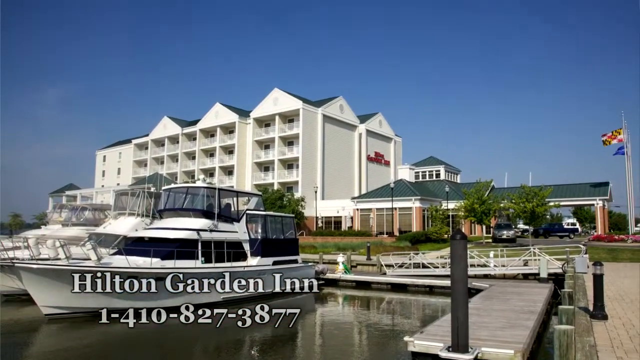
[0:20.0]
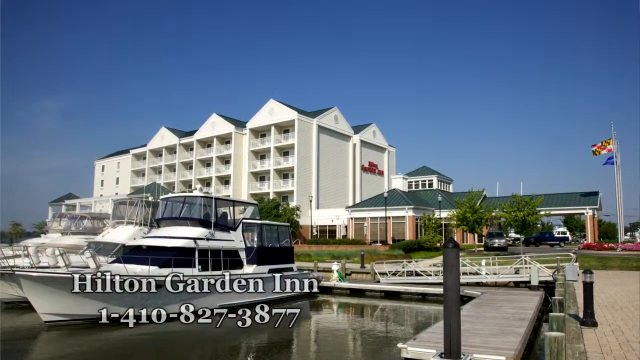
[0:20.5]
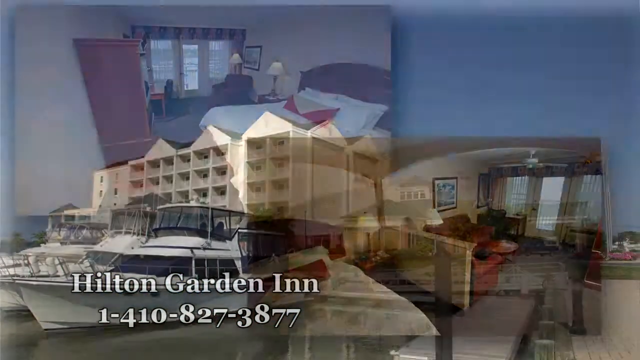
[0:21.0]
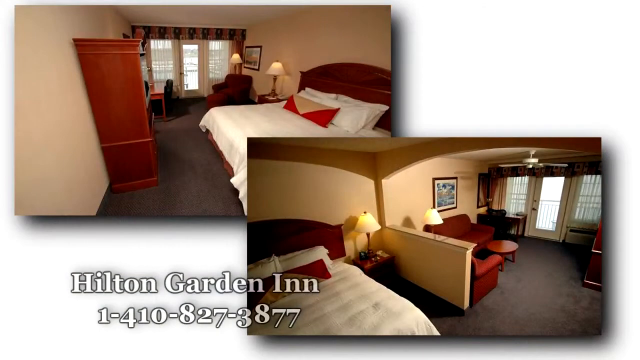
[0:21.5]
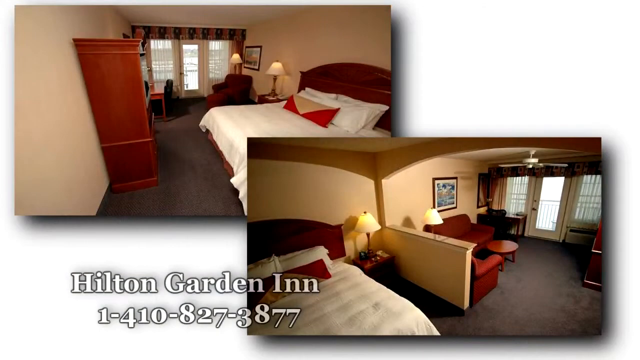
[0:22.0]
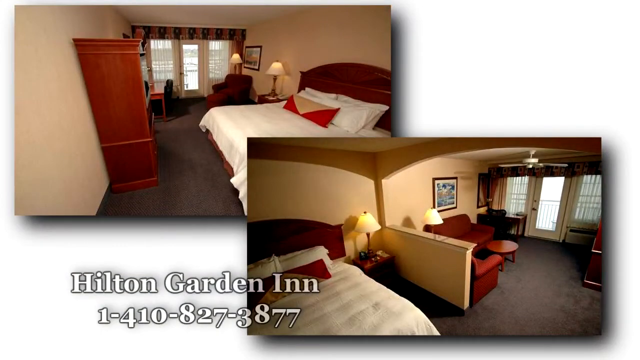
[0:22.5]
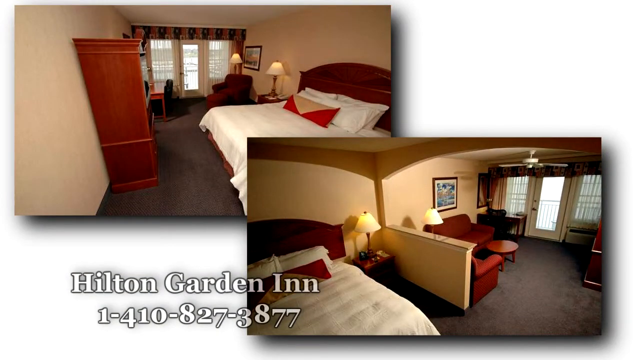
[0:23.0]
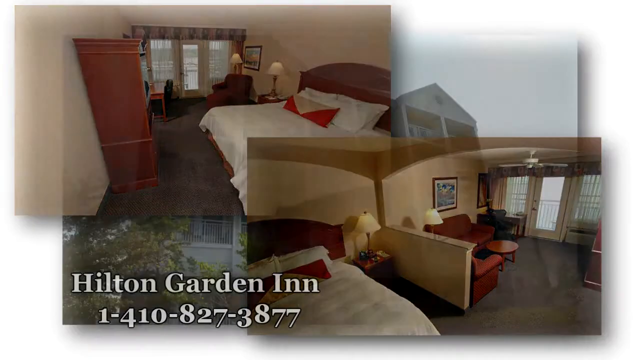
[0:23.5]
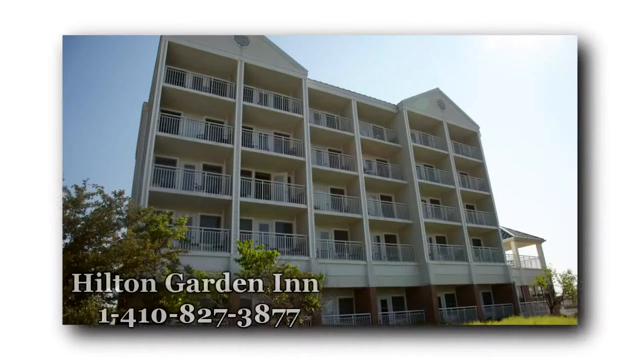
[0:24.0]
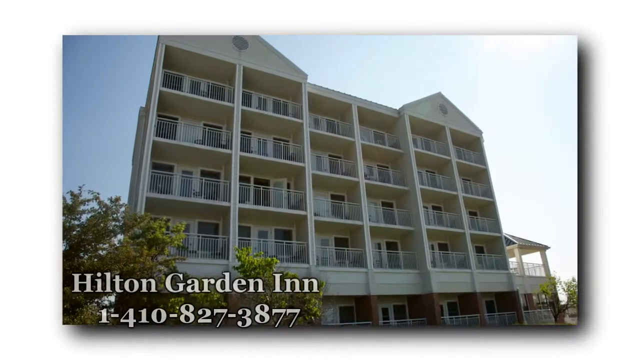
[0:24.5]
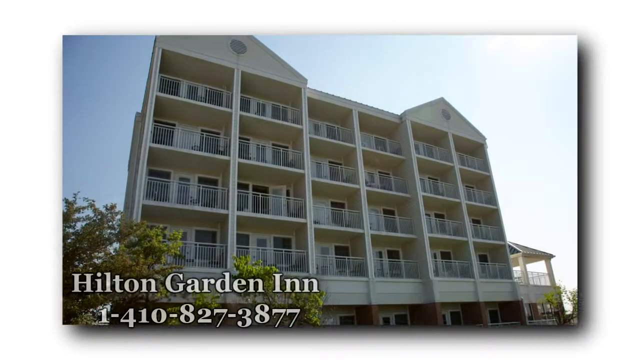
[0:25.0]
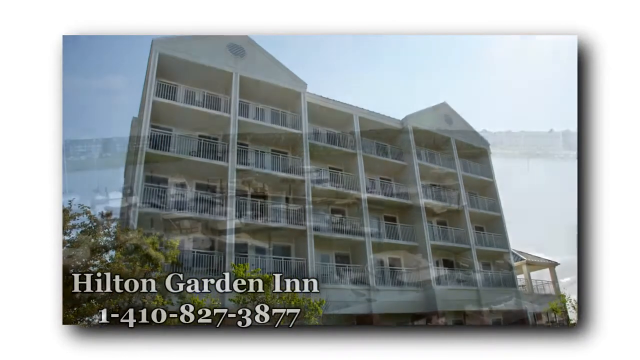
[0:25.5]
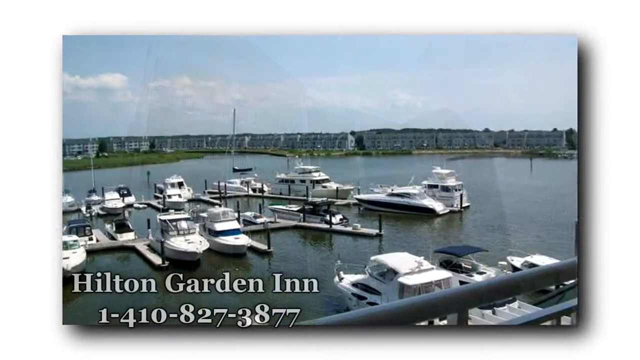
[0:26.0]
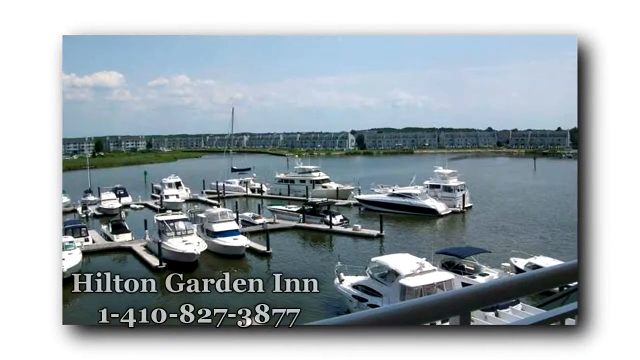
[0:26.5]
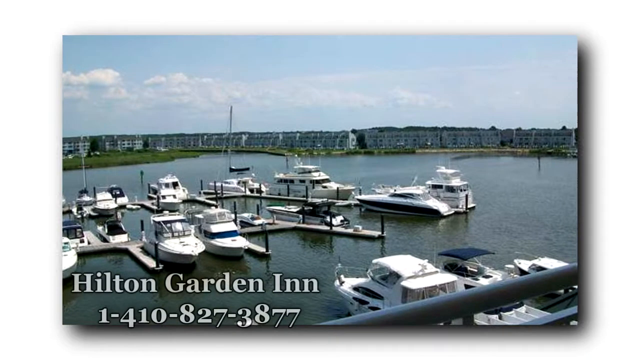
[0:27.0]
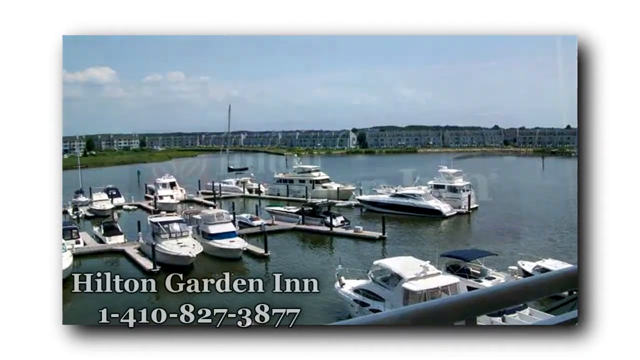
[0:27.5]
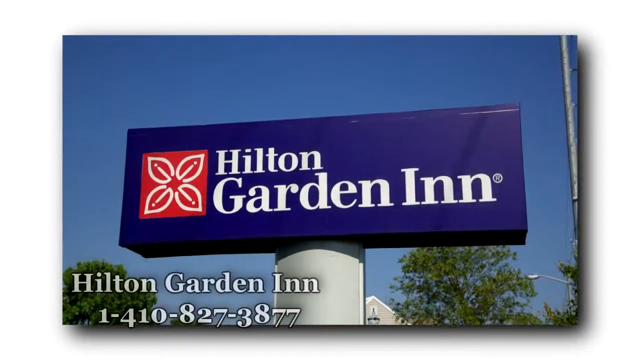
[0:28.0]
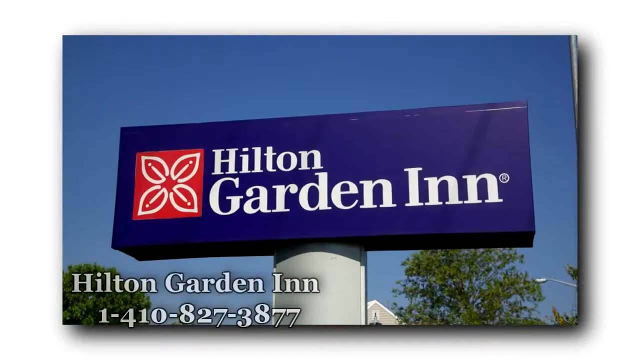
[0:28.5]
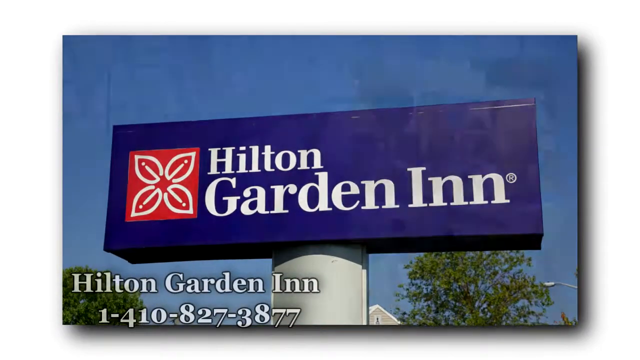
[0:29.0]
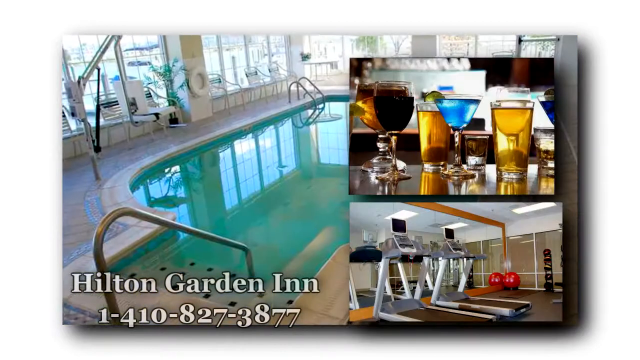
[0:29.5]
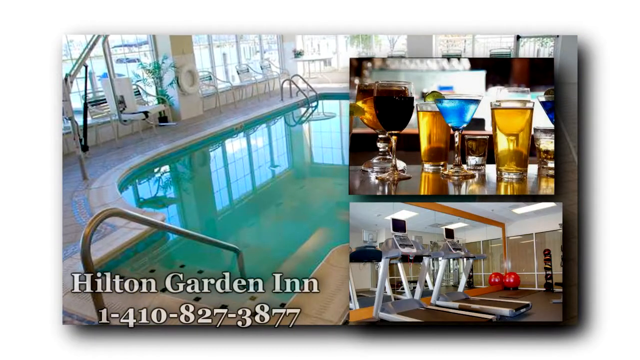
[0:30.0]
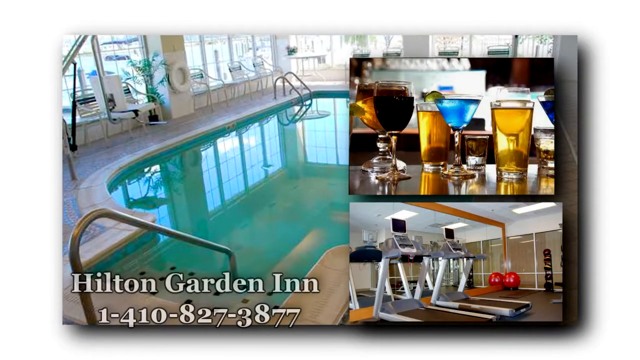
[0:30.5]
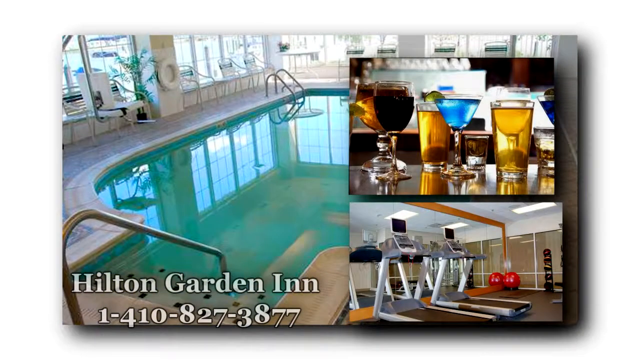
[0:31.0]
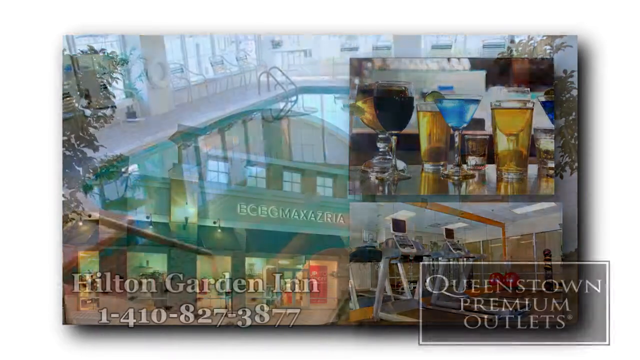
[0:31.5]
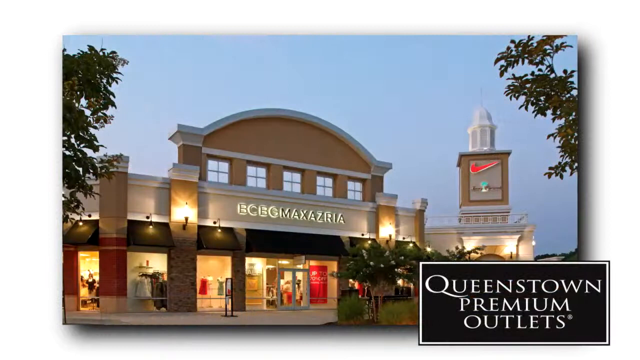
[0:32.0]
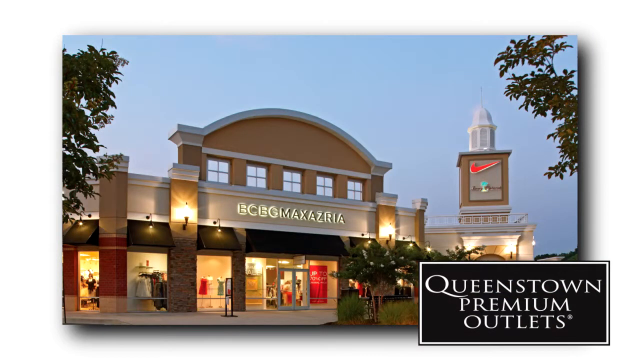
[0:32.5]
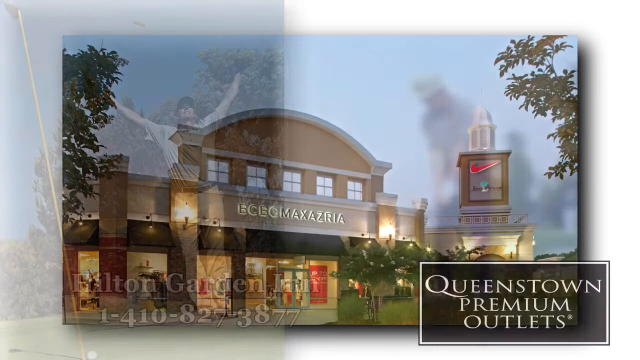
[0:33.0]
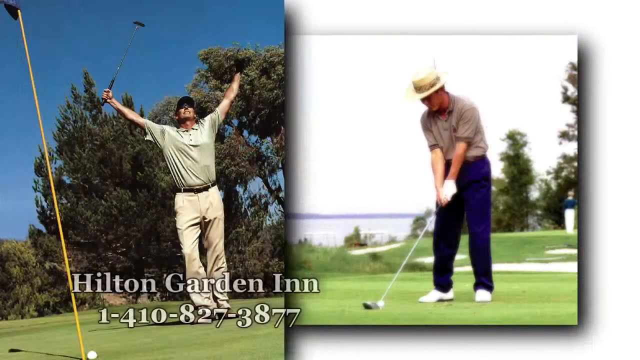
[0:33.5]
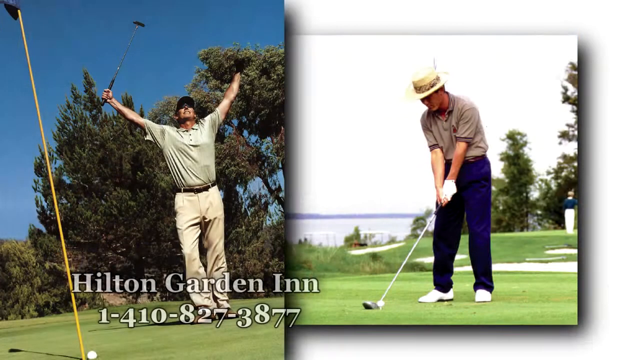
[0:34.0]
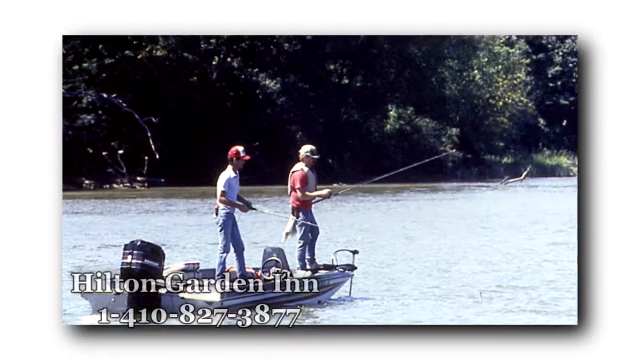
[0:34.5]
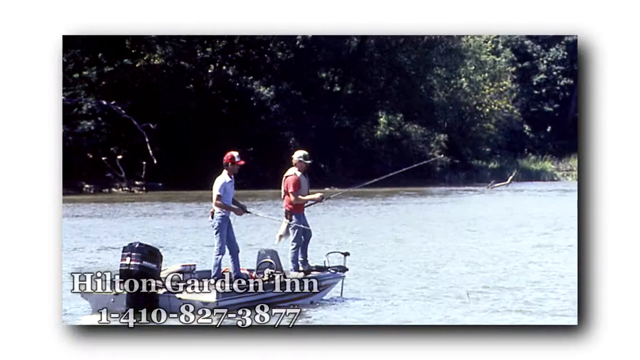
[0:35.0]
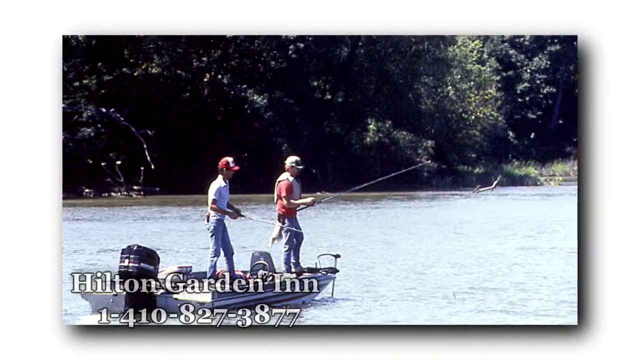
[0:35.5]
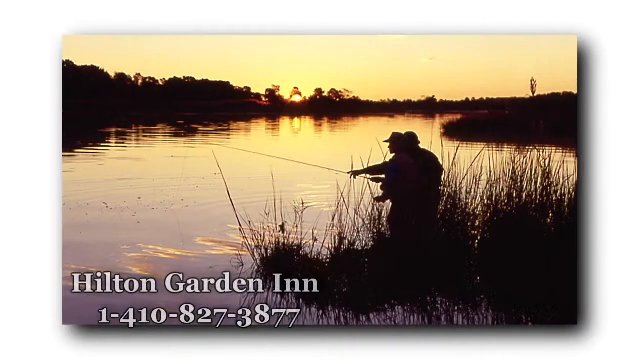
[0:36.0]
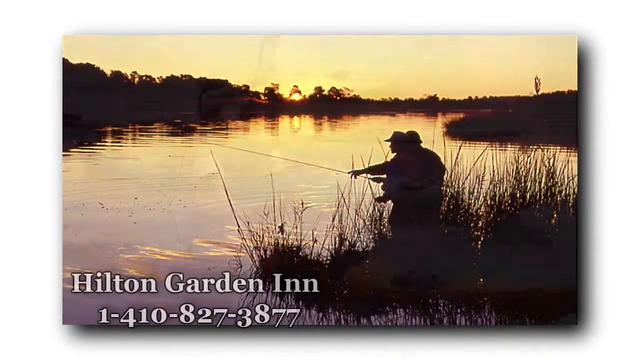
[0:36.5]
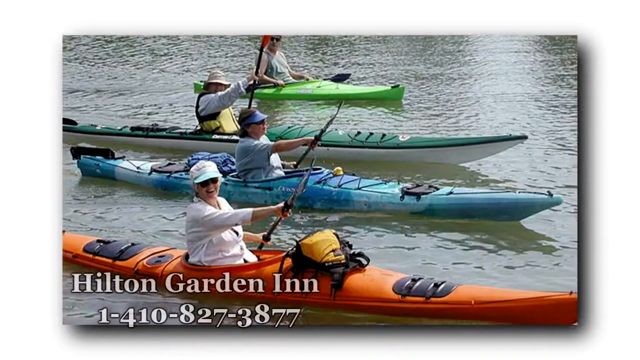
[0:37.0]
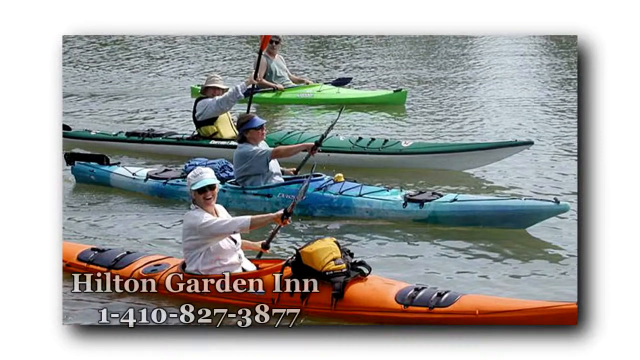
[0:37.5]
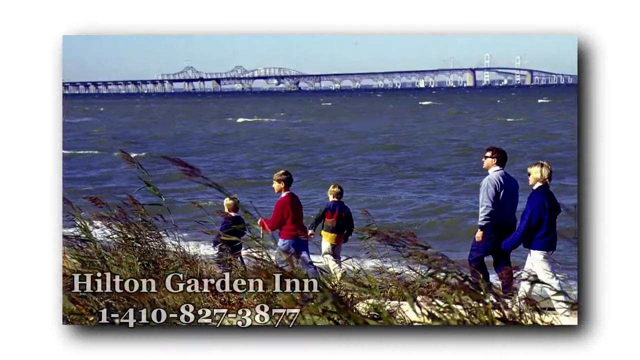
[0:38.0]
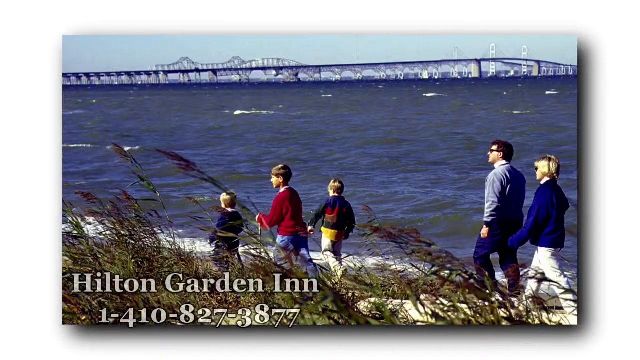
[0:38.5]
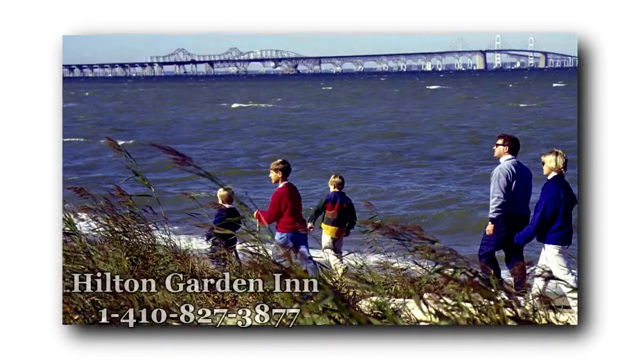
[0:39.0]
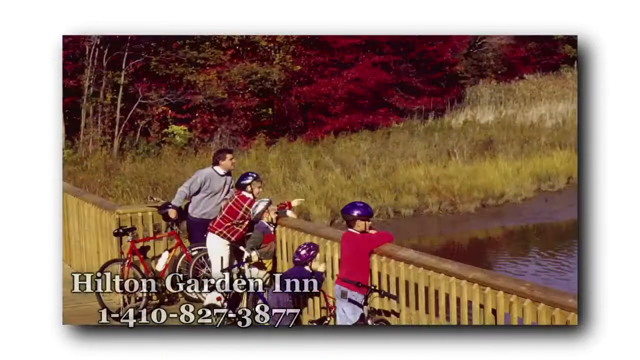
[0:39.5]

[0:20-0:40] The Hilton Garden Inn is shown right on the water next to a marina with boats. Crabs, mussels and clams are shown, then the rooms. The building is pretty tall and looks like it has about five stories. The marina and the sign appear, followed by an indoor pool that looks like it could use a clean, a bar, and a gym to work out in. Text mentions shopping at "Queenstown Premium Outlets", and BCBG Max Azria and Nike are shown. Golf, fishing, kayaking and a walk along the water are shown. A bridge appears, the one that goes over to the eastern shore, and then some kids lean over a railing.